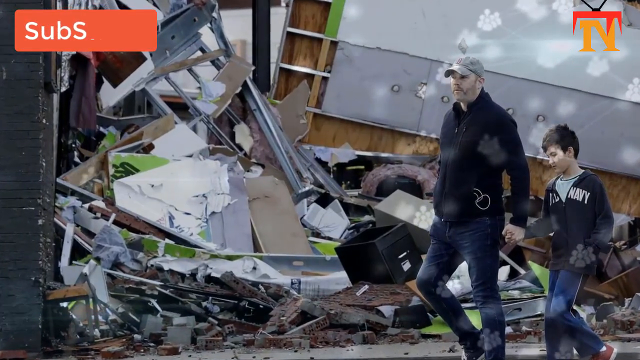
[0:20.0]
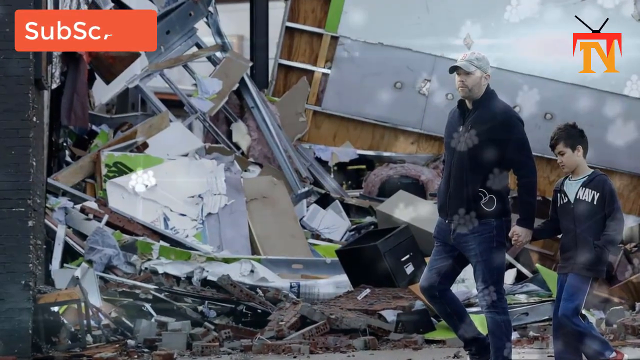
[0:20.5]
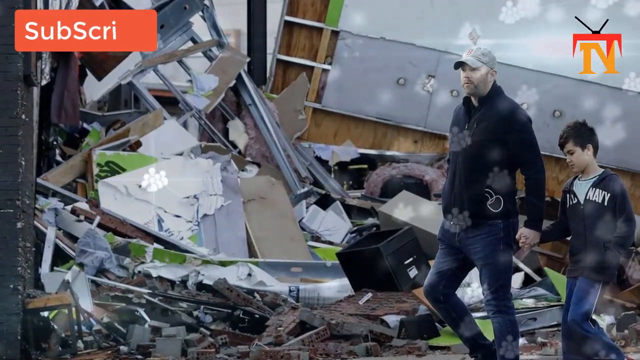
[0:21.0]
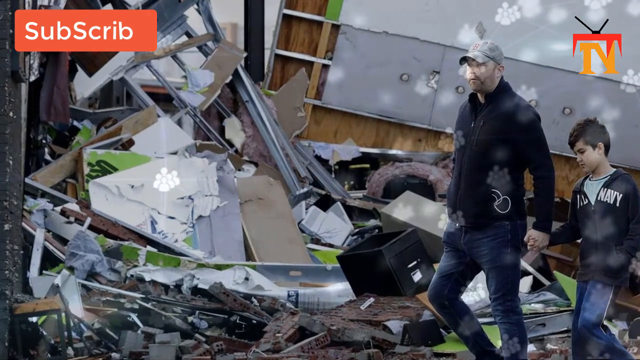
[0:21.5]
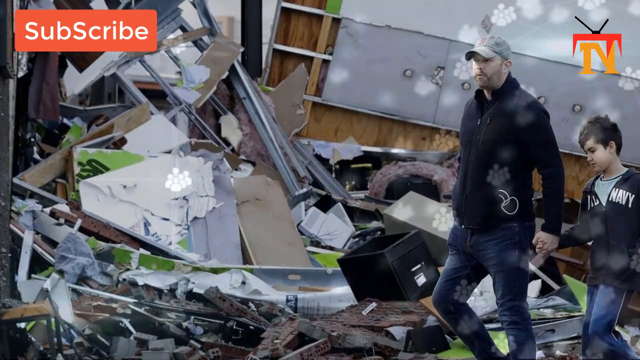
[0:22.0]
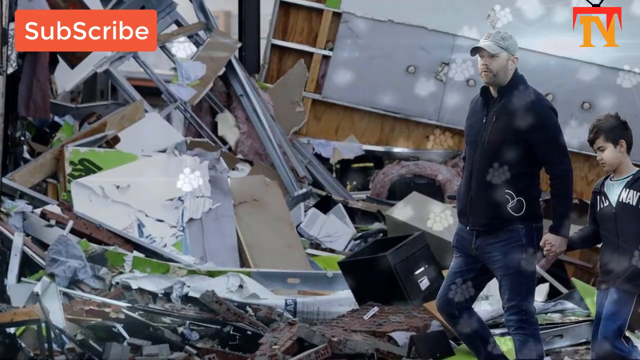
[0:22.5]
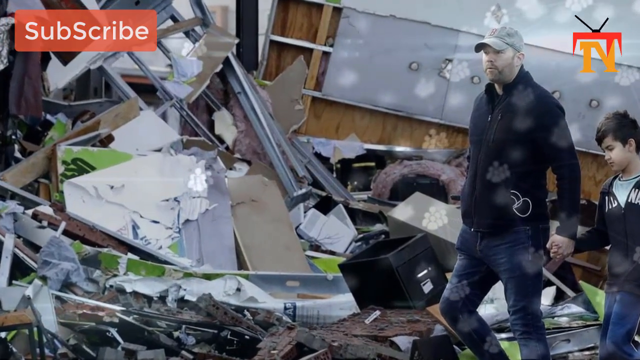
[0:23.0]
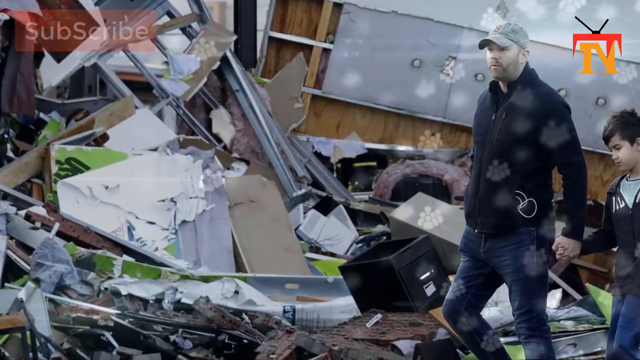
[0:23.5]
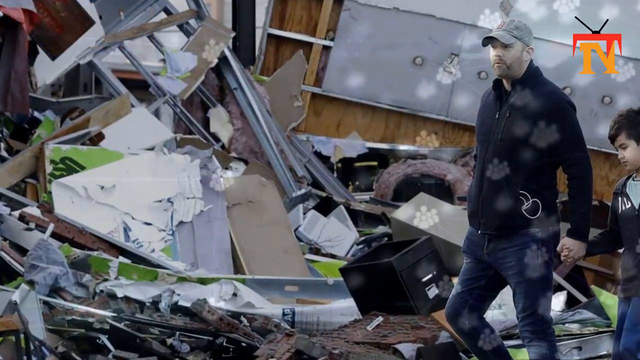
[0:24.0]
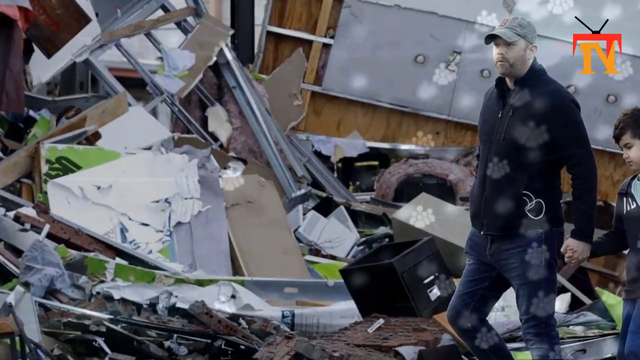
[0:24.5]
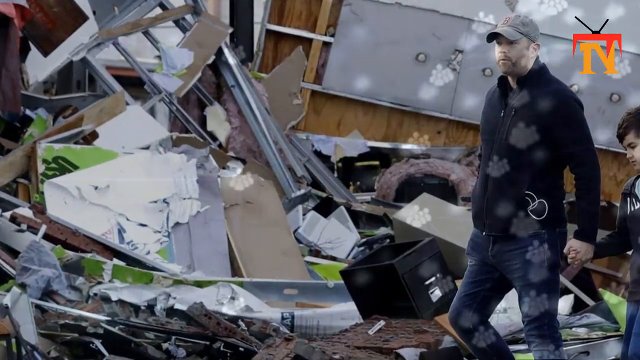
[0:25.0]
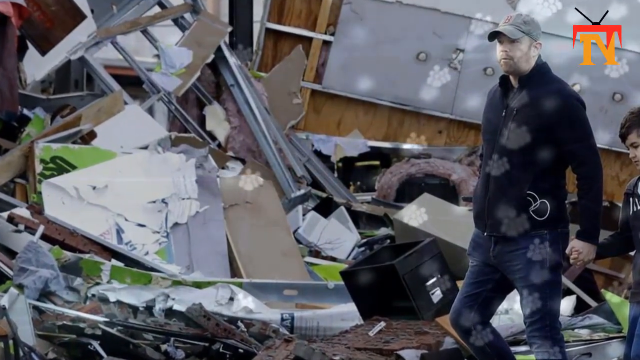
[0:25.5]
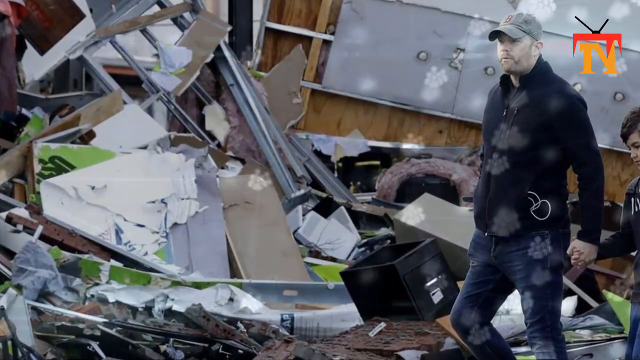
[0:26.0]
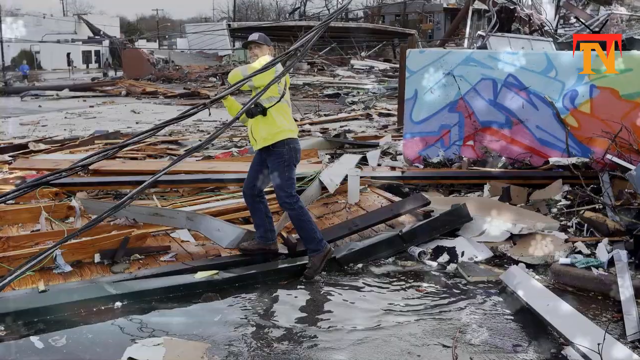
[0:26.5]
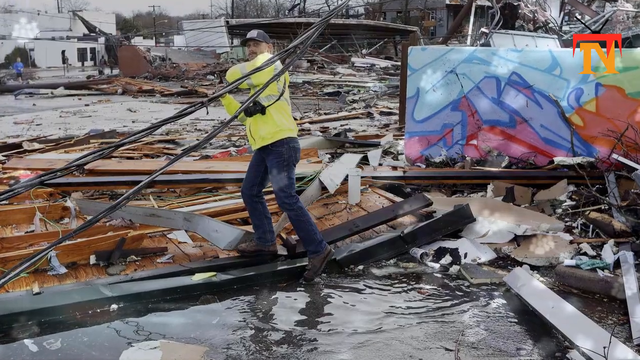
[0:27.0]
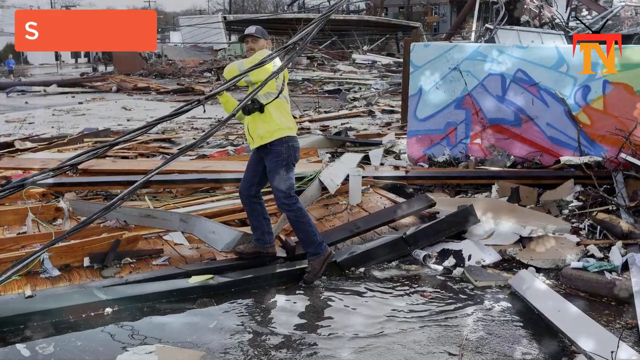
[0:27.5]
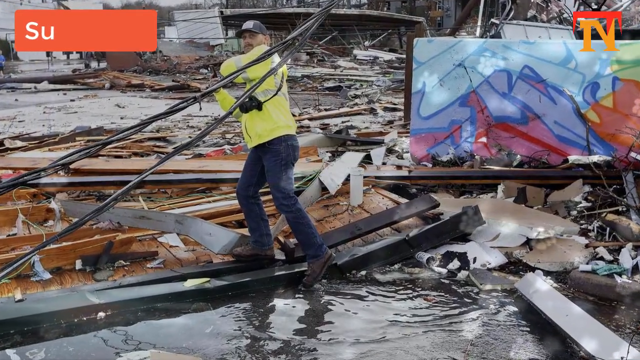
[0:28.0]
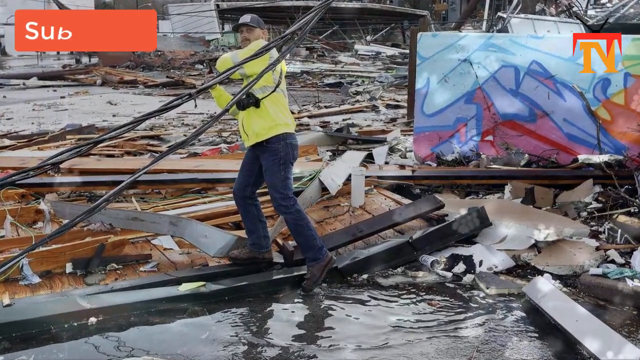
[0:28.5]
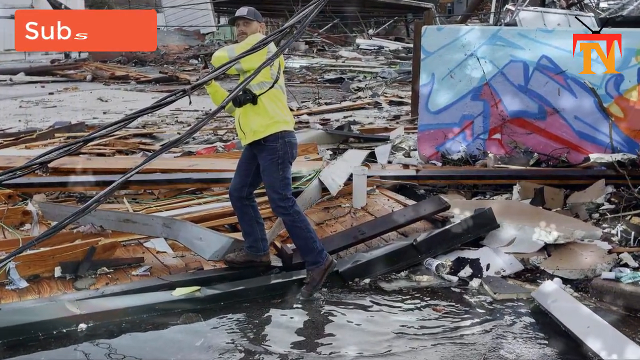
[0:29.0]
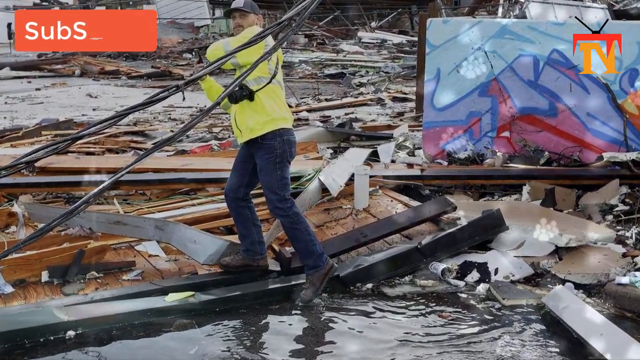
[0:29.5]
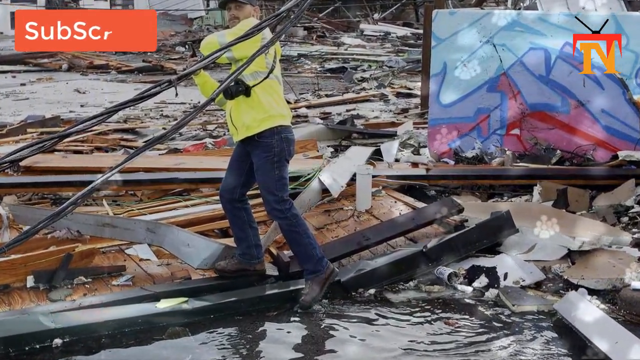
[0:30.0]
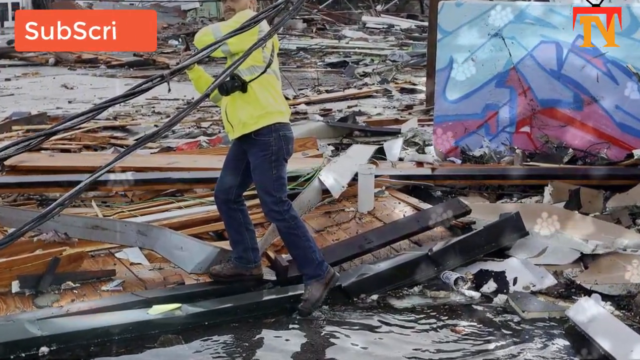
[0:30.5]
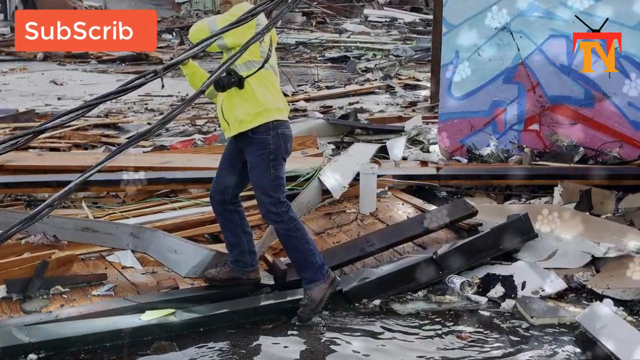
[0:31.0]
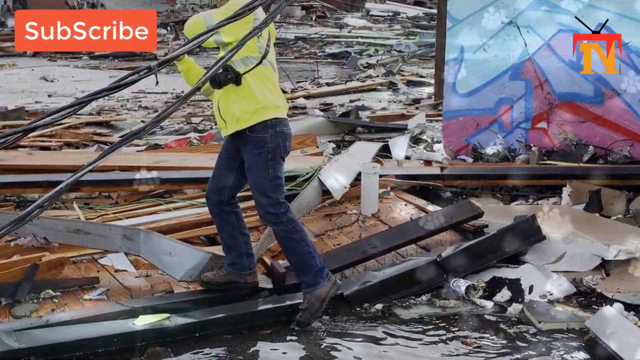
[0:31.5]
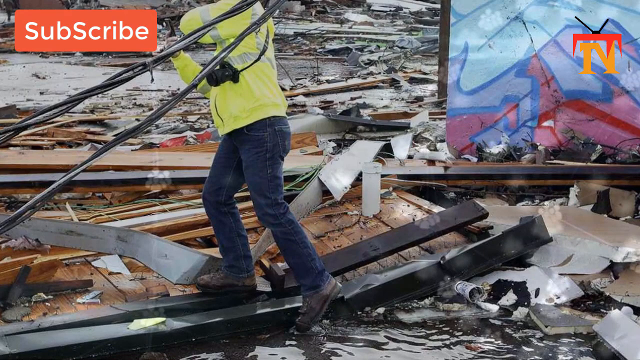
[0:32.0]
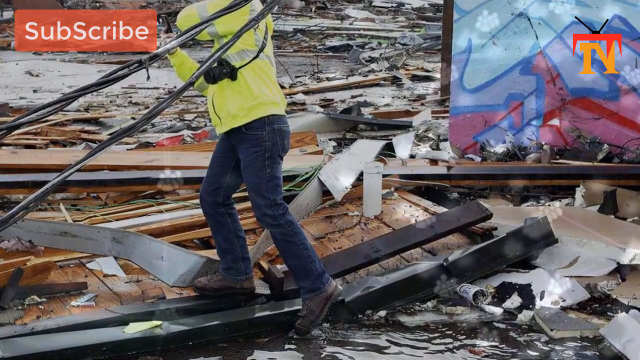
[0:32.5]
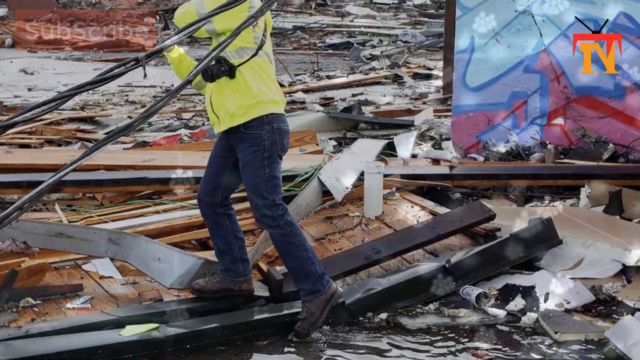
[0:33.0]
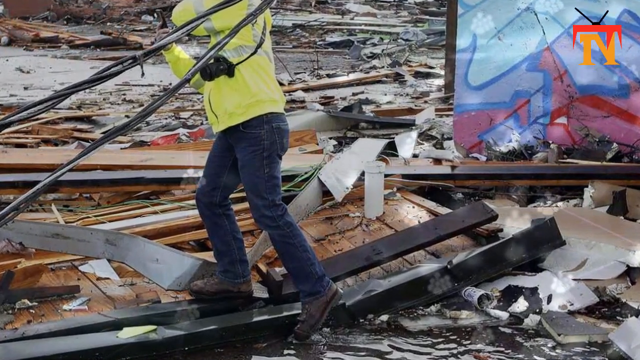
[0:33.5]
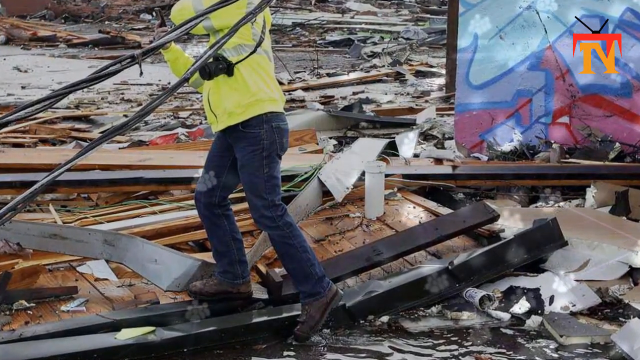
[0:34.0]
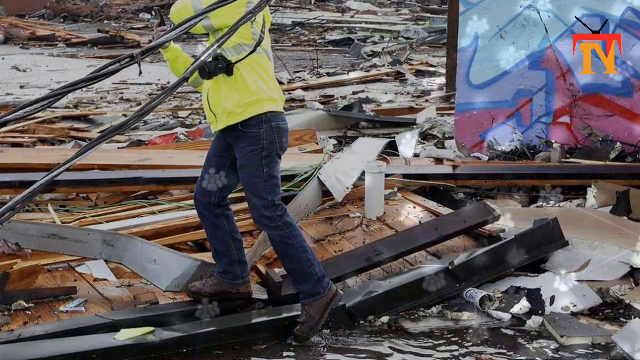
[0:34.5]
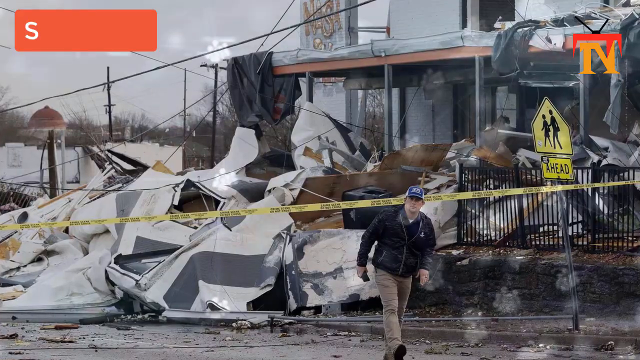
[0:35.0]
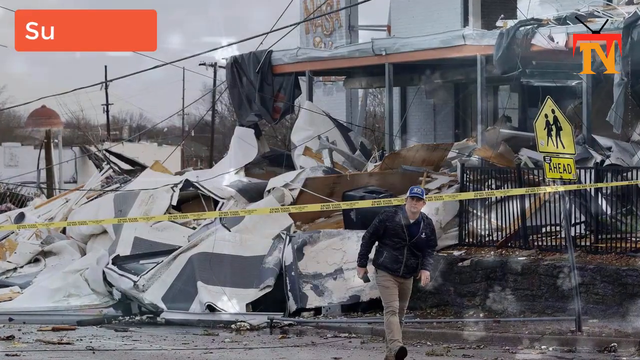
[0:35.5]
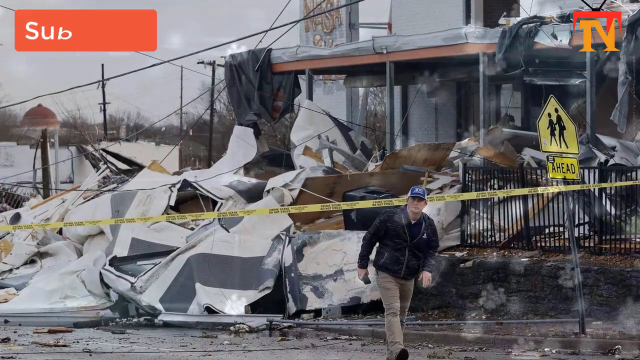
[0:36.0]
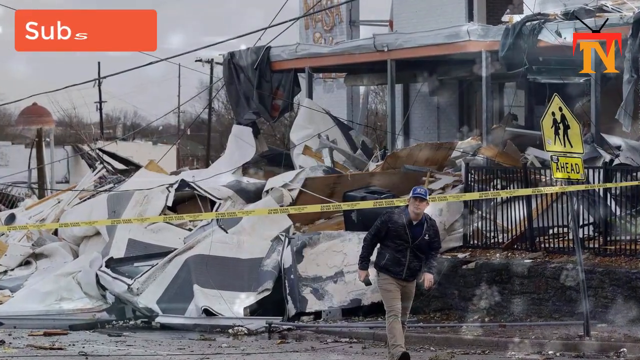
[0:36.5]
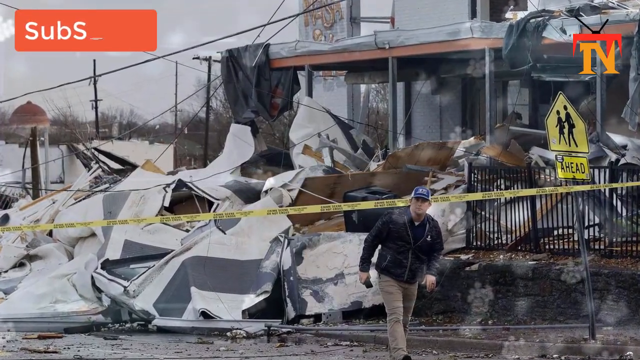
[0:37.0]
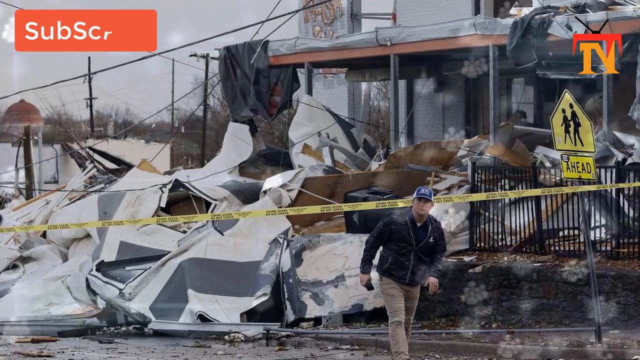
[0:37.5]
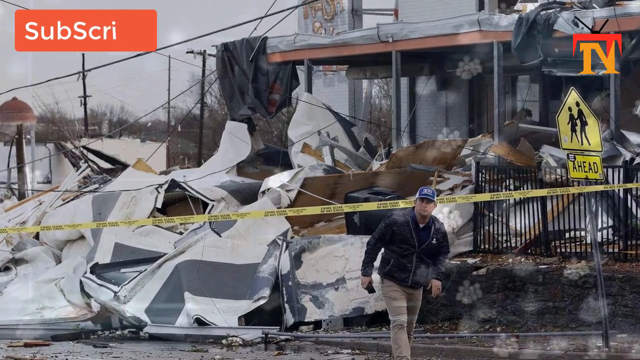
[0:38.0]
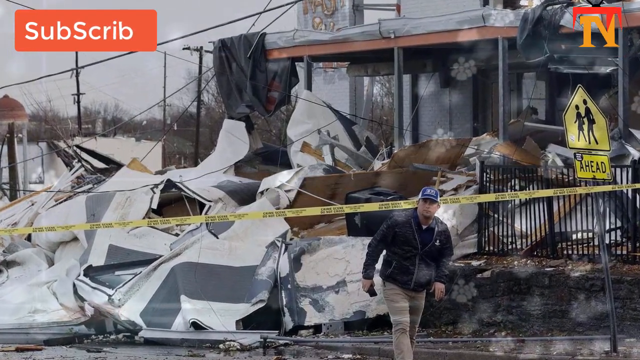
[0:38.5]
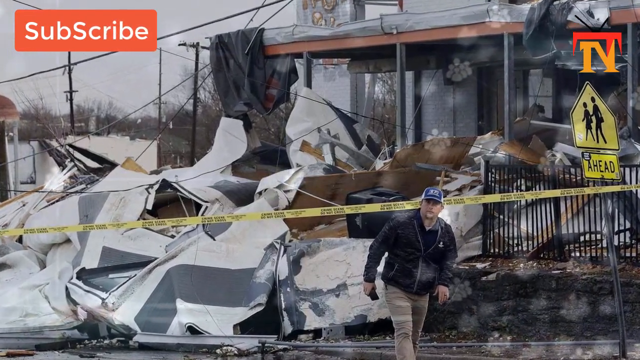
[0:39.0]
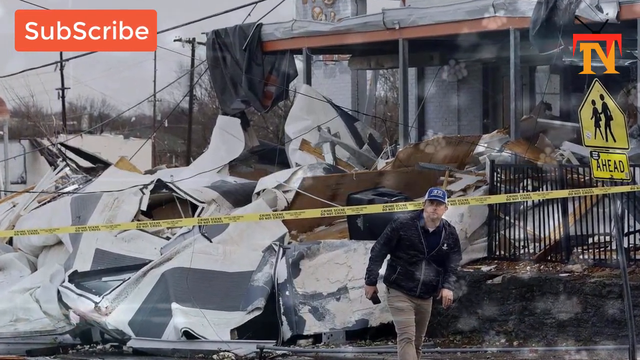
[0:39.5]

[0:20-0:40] An older man holds the hand of a young boy in a navy blue sweatshirt, with a lot of wreckage in the background; the man's face looks quite concerned. A subscribe button appears and disappears periodically in the top left. The scene switches to another image of wreckage, with multiple lines and cables running from the top of the screen to the bottom. A man in a bright vest and long-sleeve shirt, similar to what construction workers wear, tugs at one of the dangling lines while standing on wreckage scattered across the street. The camera slowly zooms in on the building behind him, which is lying around the sidewalk. A lot of wreckage runs from the base of the building down toward the street.